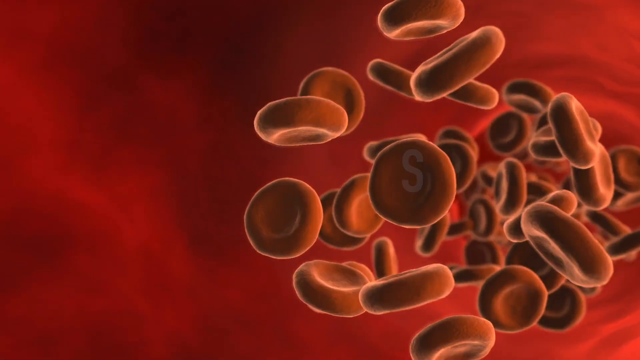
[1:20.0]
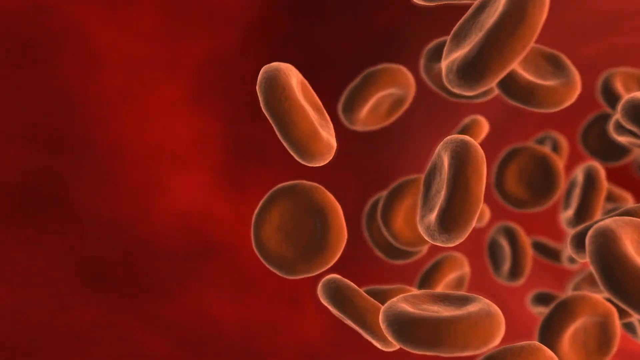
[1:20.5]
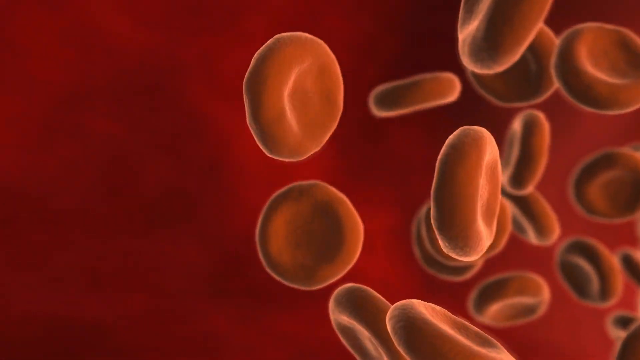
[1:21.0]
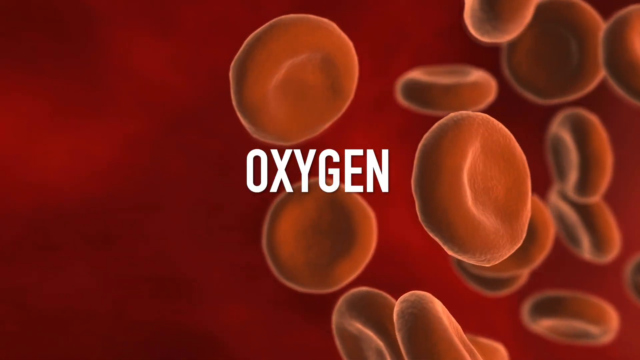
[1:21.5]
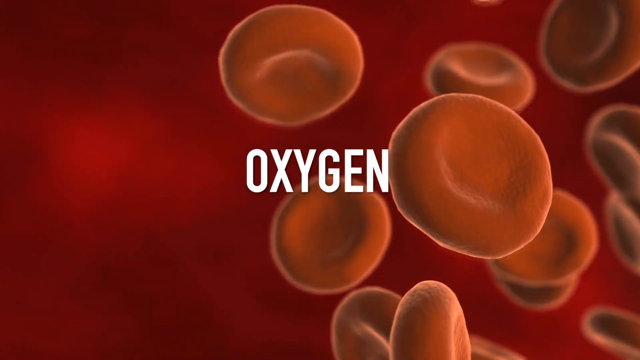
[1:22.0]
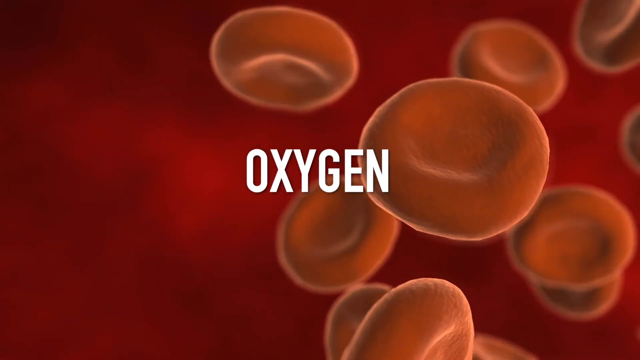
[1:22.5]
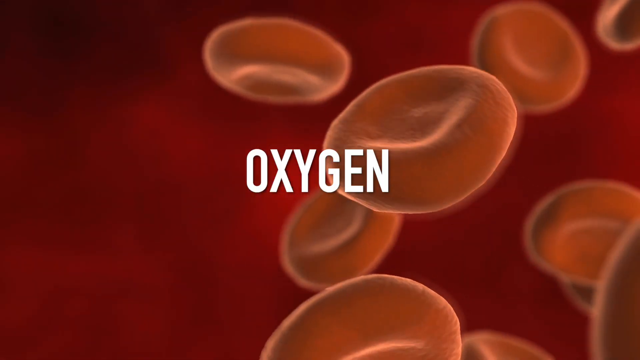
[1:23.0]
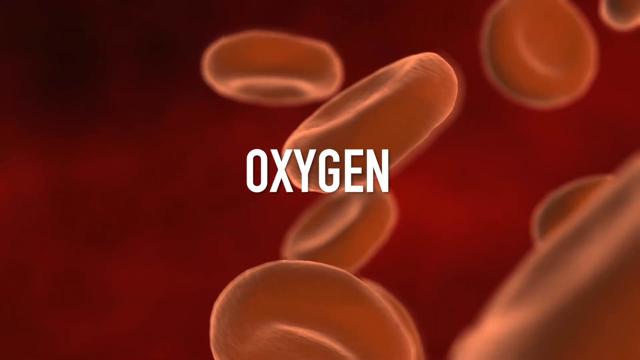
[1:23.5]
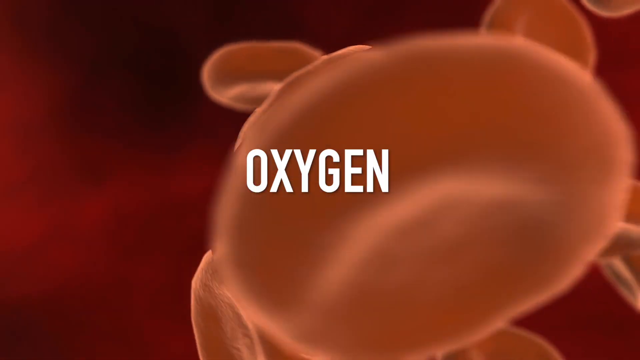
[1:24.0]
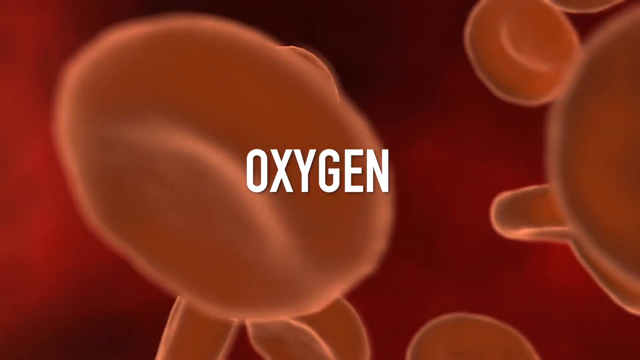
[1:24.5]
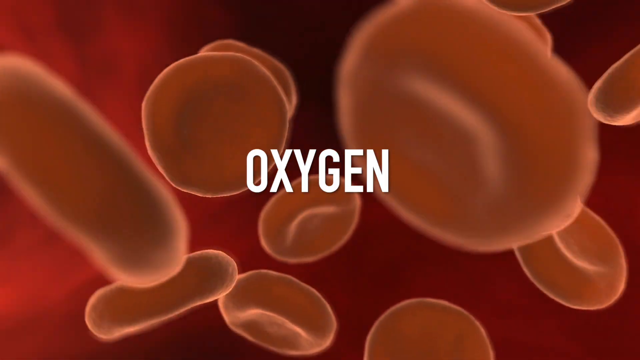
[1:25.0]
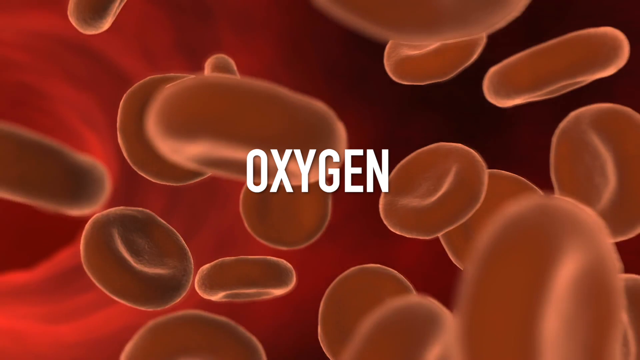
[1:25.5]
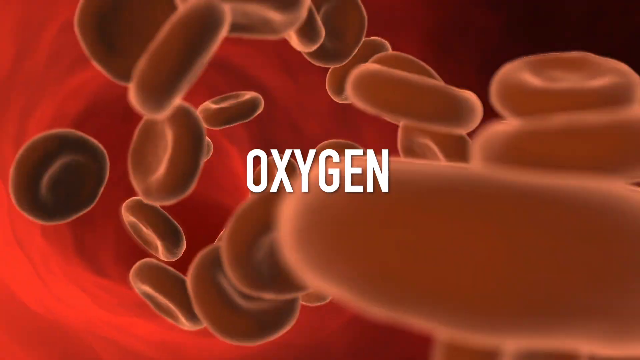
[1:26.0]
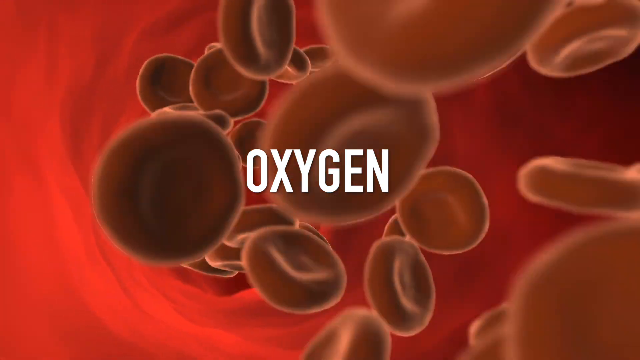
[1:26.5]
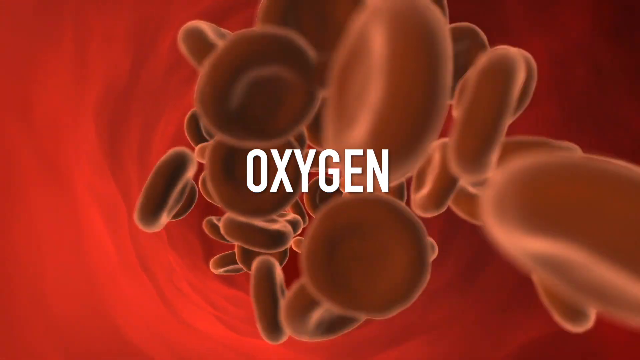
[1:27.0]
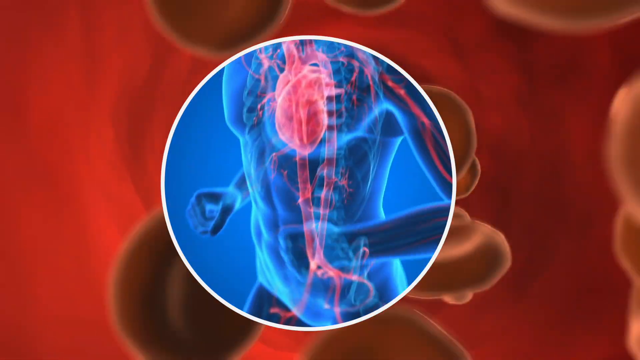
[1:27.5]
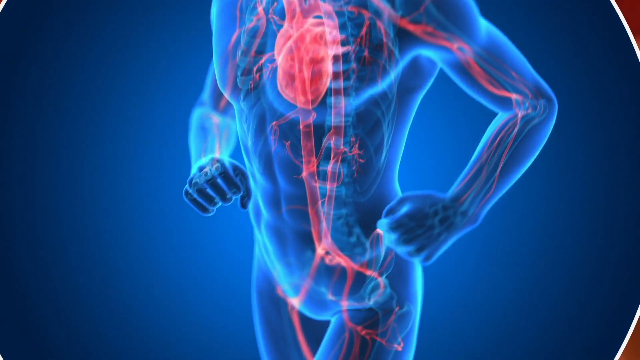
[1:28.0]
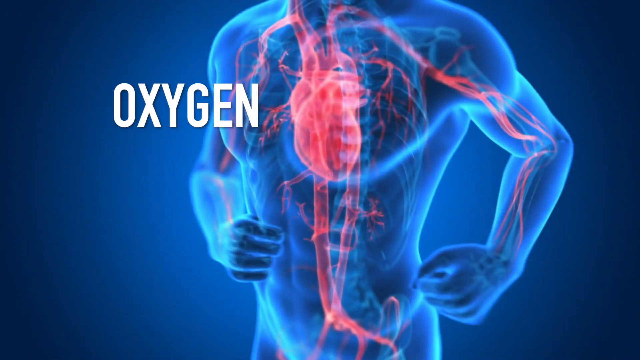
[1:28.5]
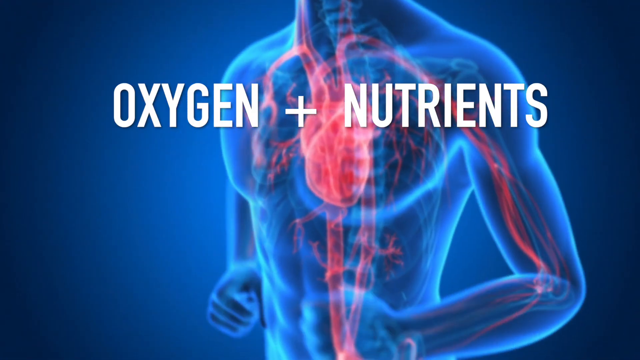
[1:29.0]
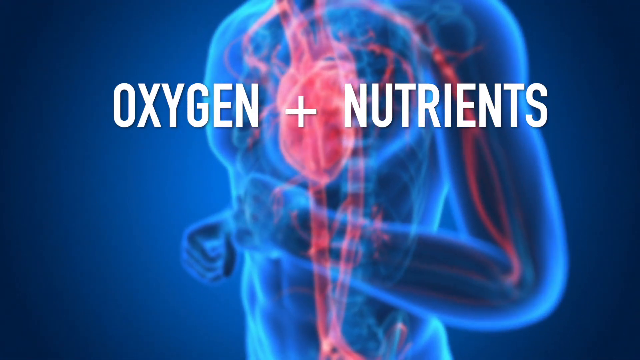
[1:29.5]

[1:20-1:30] Red blood cells move slowly through the artery, and the word "oxygen" appears in bold, large white font in the center of the screen. A circular transition leads out of the artery back to the x-rayed man, who slowly jogs in place with his cardiovascular system highlighted in red and his heart slowly pumping. The words "oxygen plus nutrients" appear on the screen as he continues to jog in place.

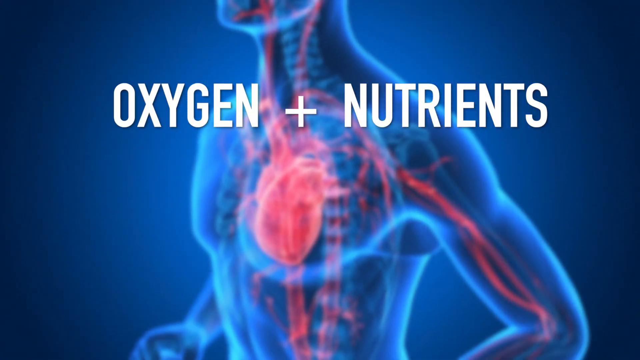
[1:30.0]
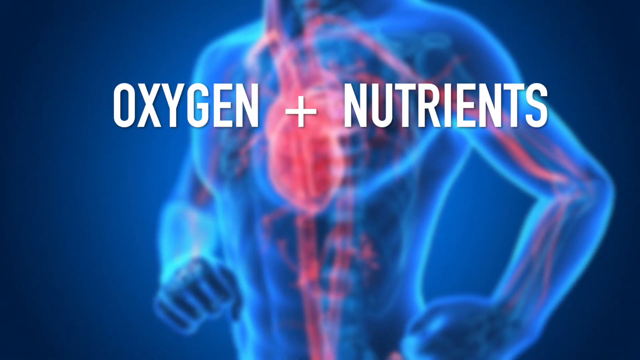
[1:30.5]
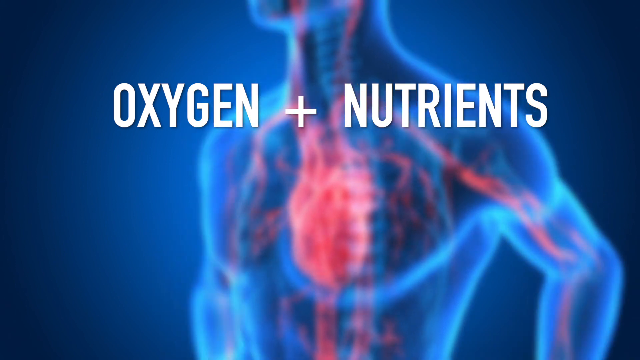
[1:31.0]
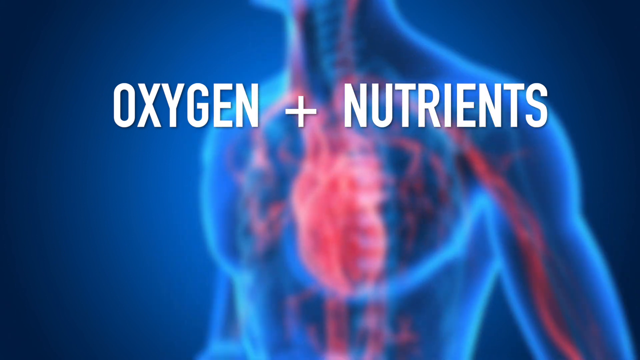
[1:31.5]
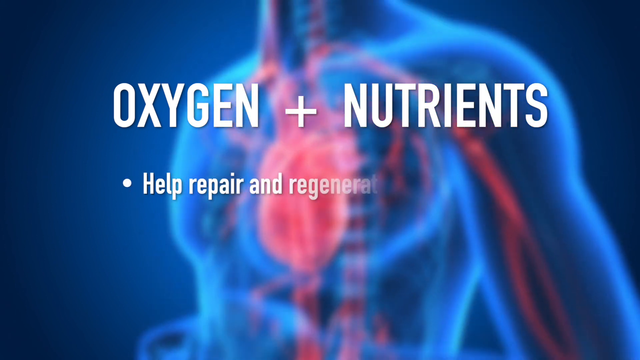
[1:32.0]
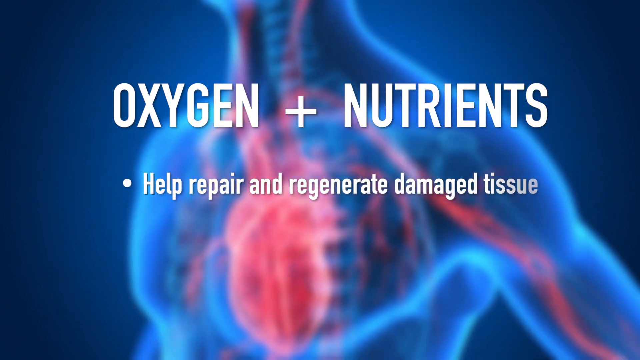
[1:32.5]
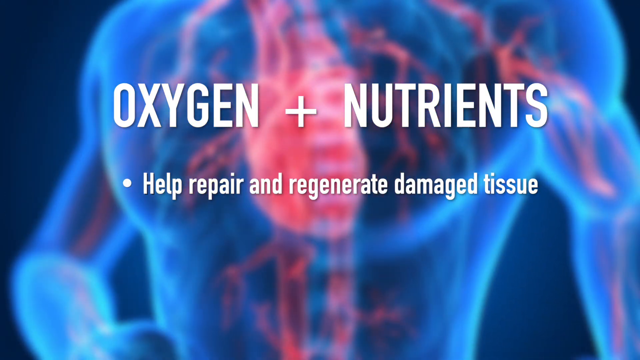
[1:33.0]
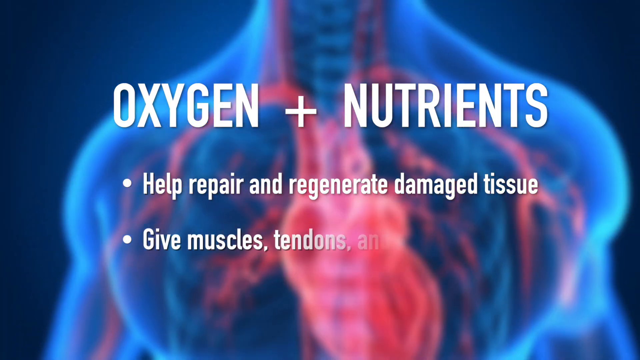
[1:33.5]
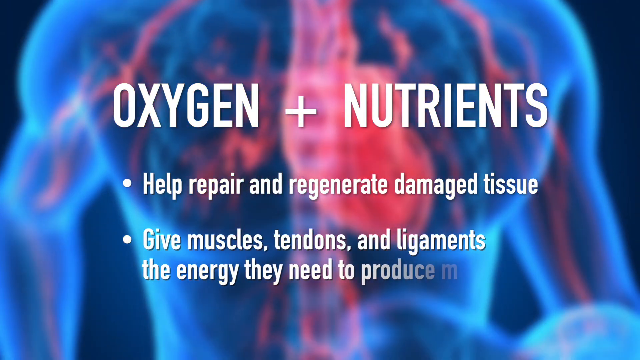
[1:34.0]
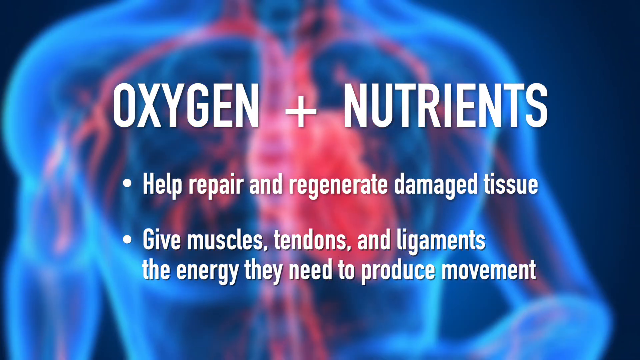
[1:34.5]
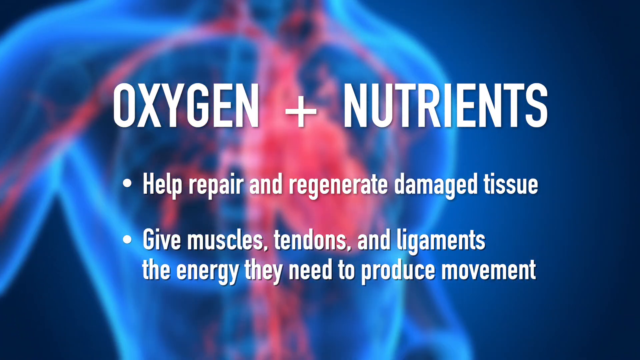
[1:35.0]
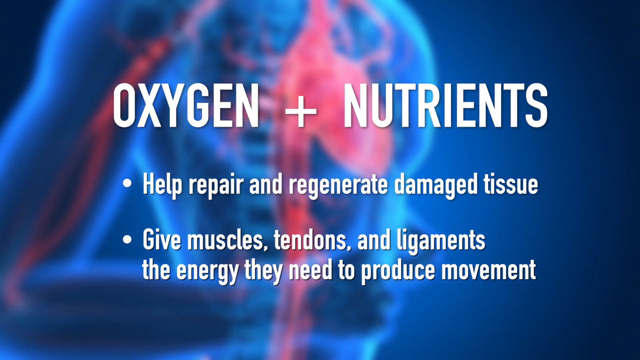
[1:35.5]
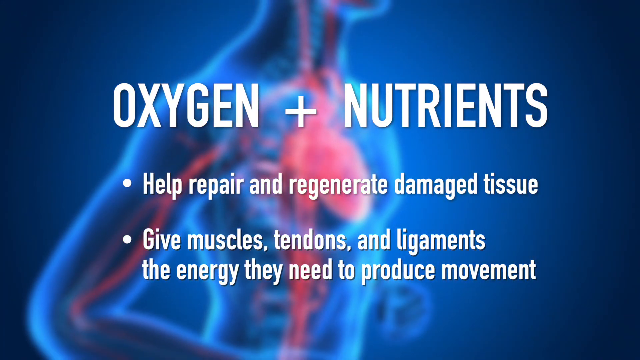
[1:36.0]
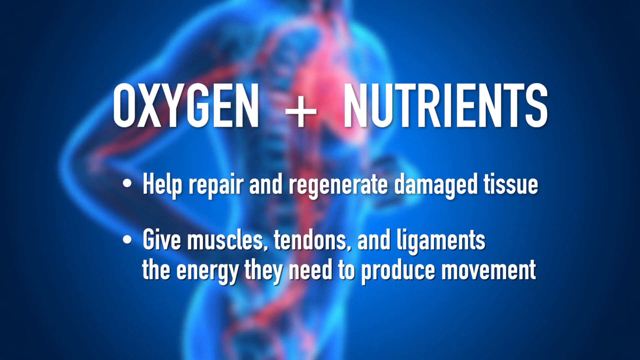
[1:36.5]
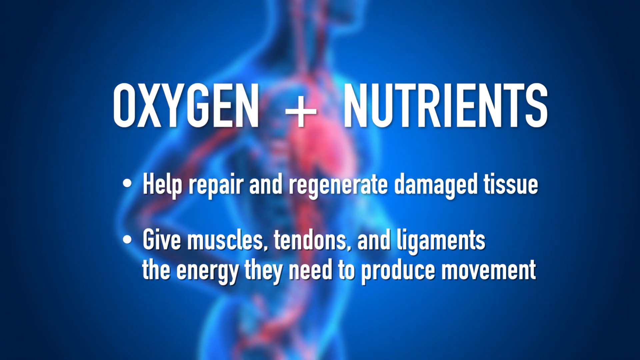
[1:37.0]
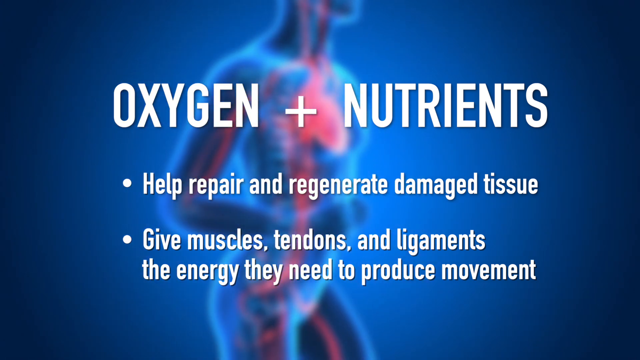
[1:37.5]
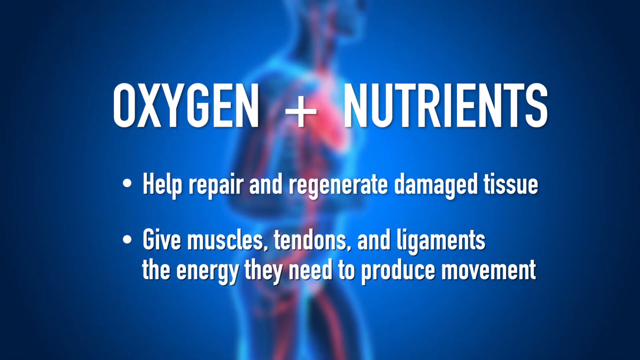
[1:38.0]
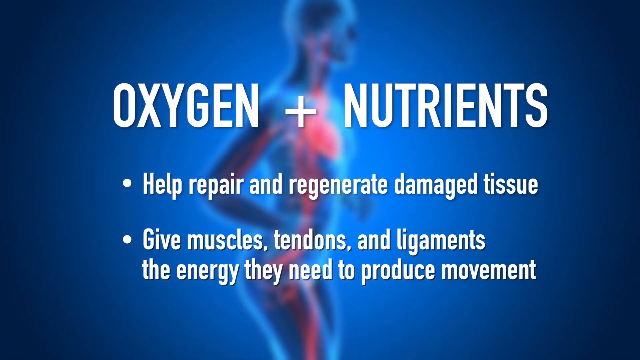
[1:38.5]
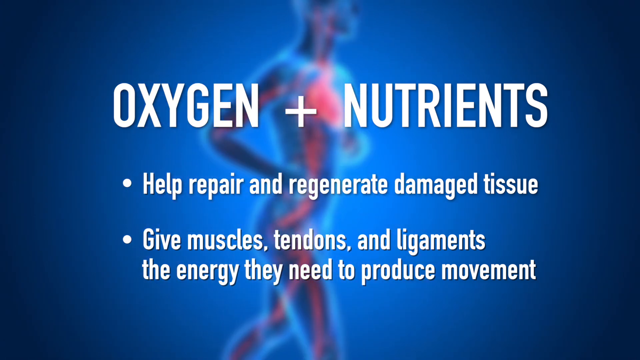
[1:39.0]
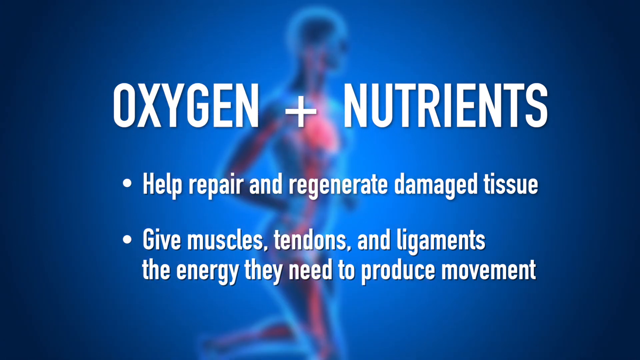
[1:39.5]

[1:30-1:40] The jogging man is shown with his x-ray body visible and the cardiovascular workings highlighted in red, the heart pumping. The words "oxygen plus nutrients" appear in bold white font on the screen. Underneath, a bullet point reads "help repair and regenerate damaged tissue", and a second bullet point appears reading "give muscles tendons and ligaments the energy they need to produce movement". The camera slowly pans around the silhouetted man as he continues to jog in place.